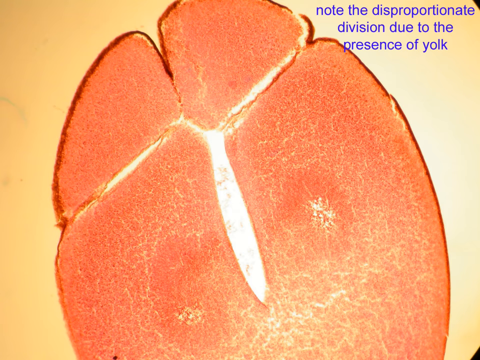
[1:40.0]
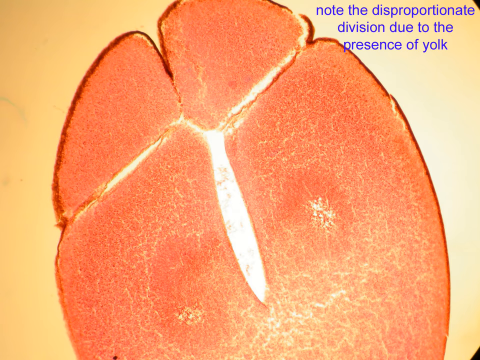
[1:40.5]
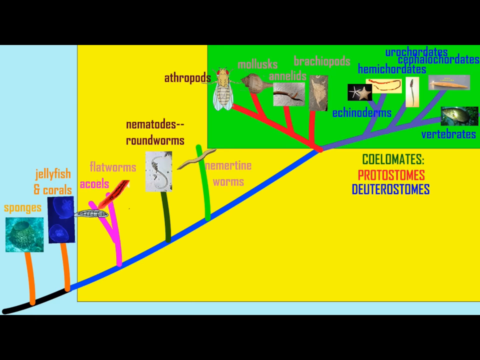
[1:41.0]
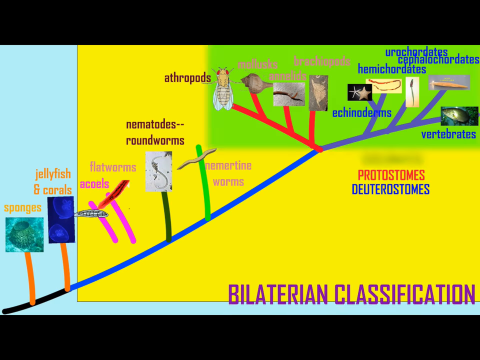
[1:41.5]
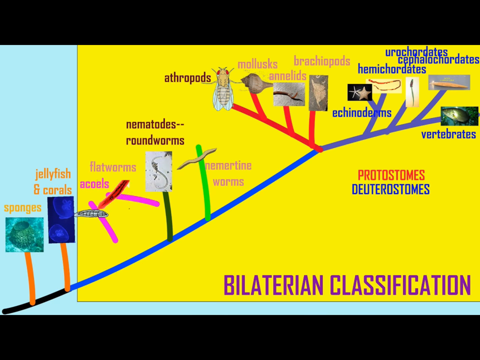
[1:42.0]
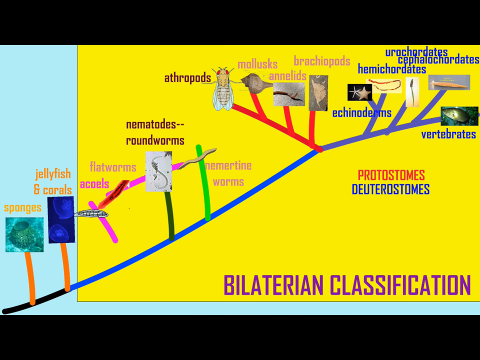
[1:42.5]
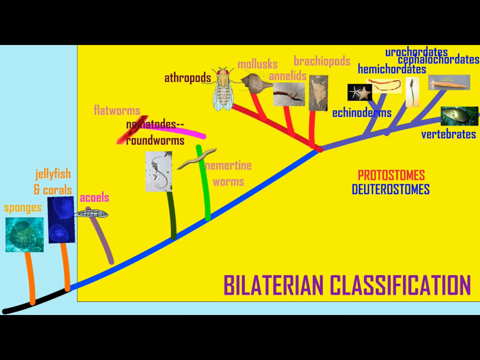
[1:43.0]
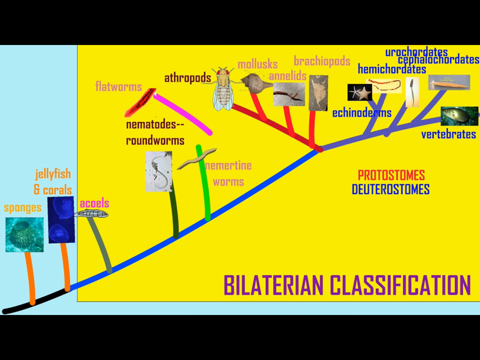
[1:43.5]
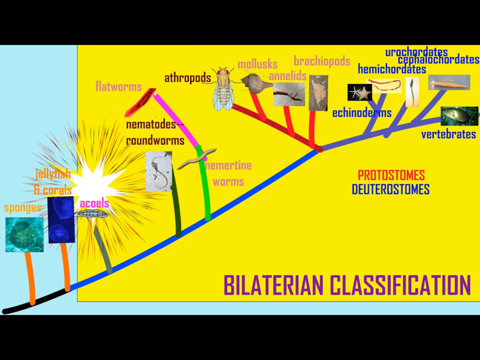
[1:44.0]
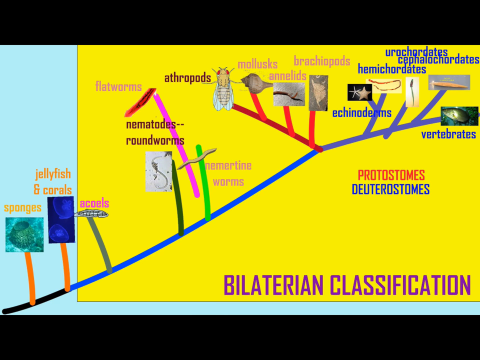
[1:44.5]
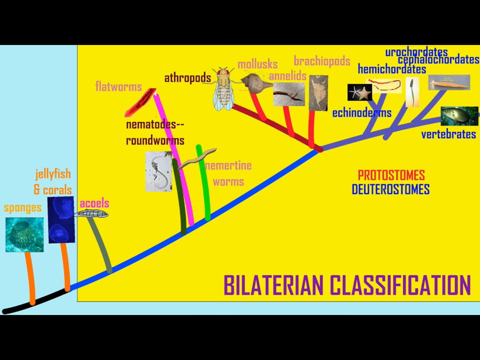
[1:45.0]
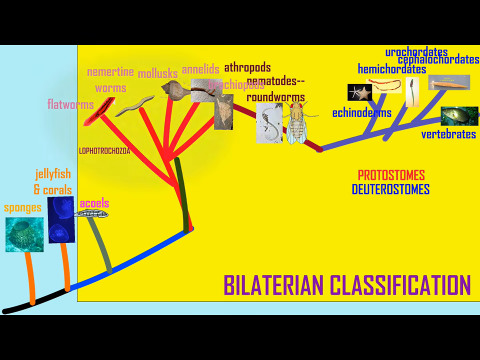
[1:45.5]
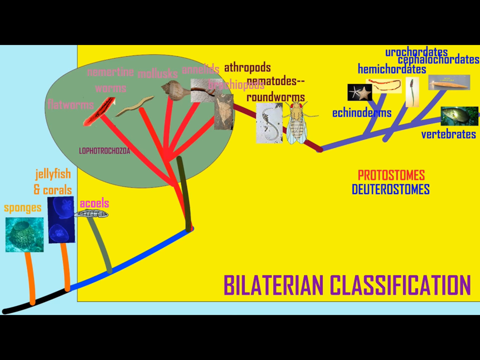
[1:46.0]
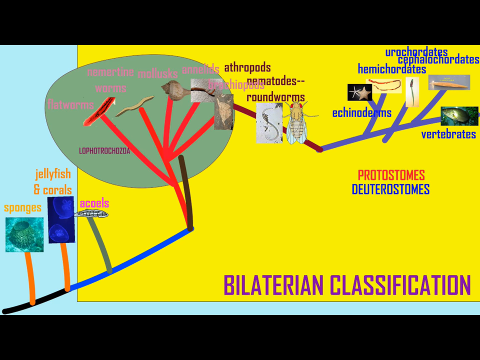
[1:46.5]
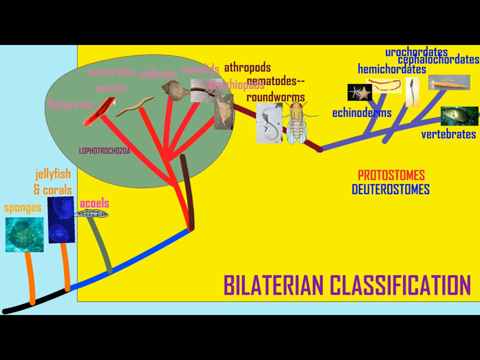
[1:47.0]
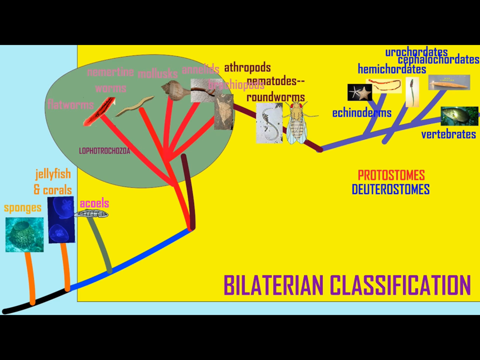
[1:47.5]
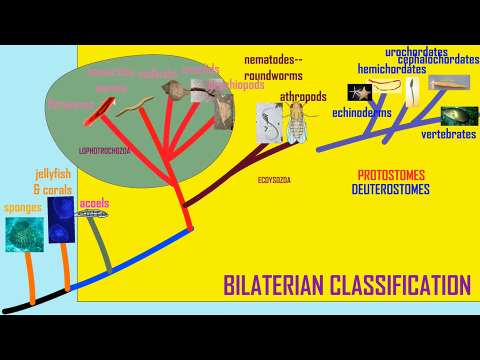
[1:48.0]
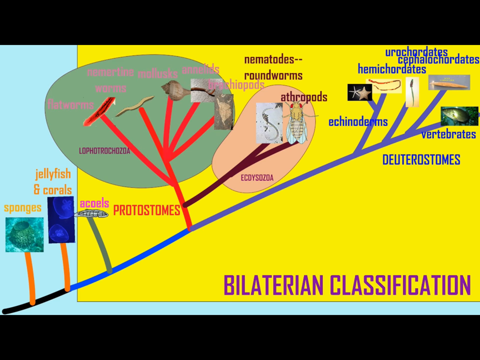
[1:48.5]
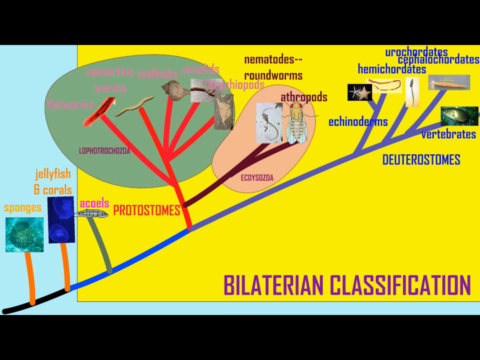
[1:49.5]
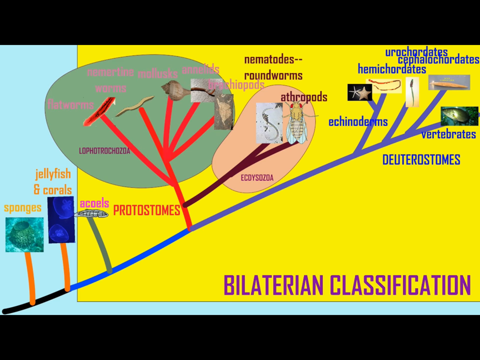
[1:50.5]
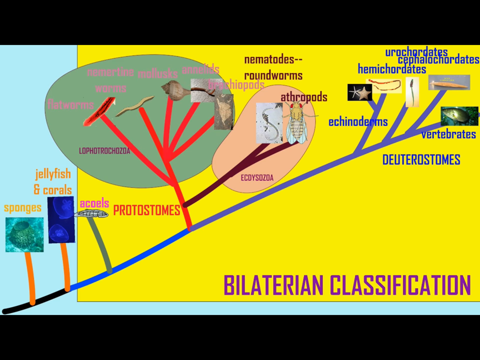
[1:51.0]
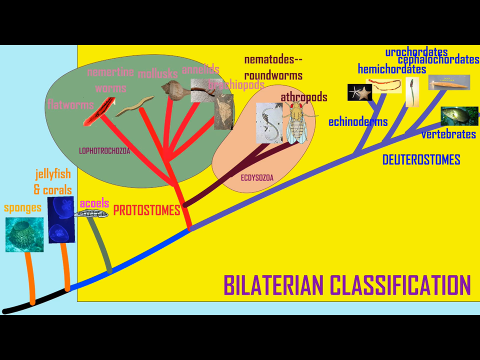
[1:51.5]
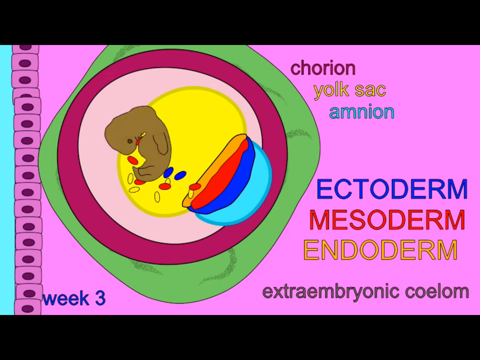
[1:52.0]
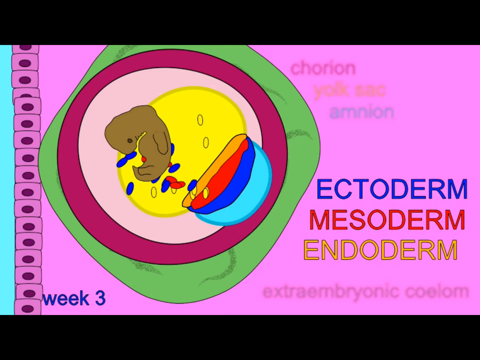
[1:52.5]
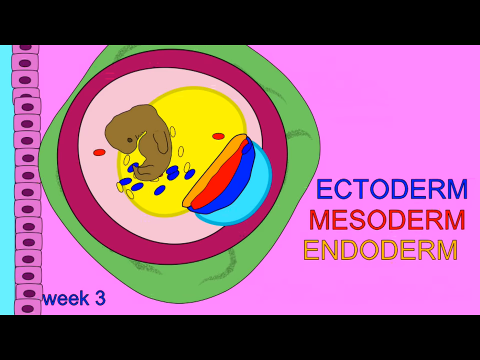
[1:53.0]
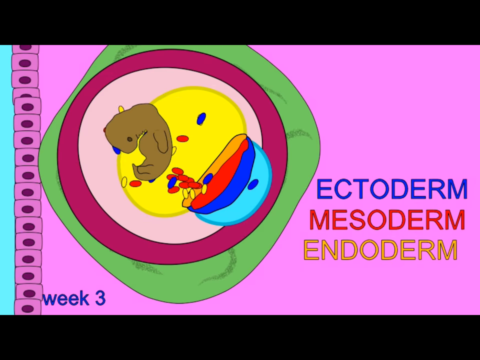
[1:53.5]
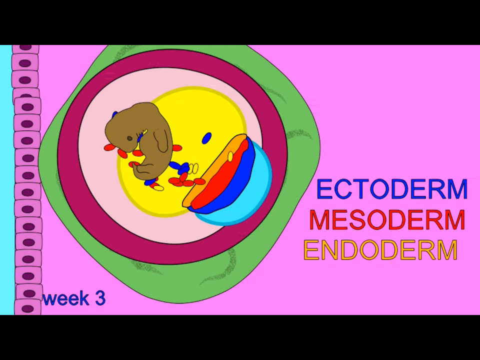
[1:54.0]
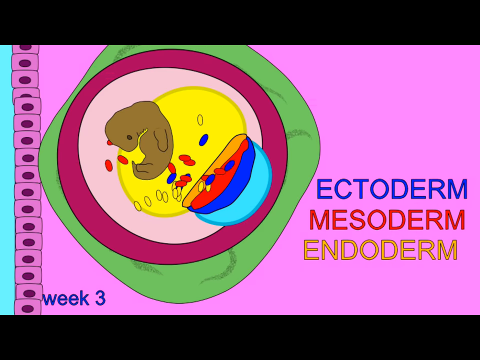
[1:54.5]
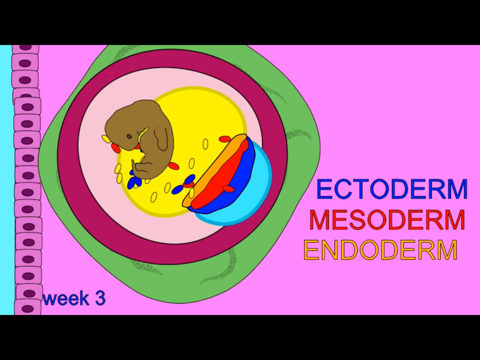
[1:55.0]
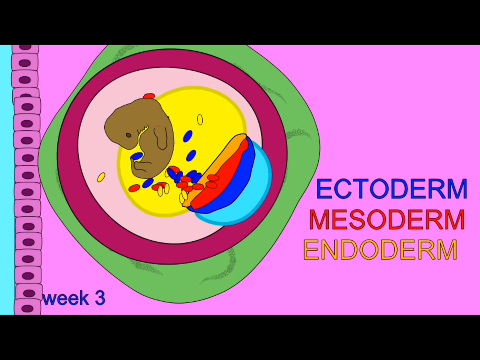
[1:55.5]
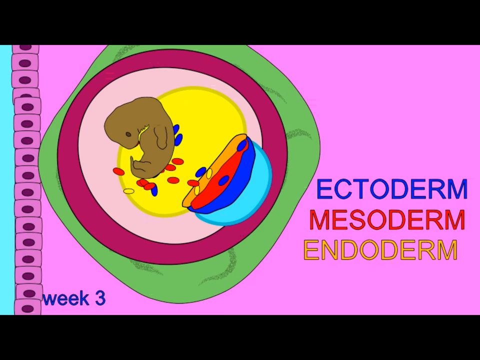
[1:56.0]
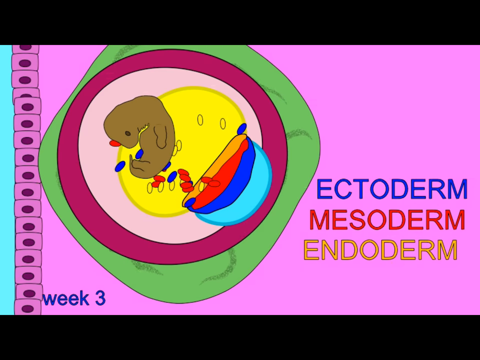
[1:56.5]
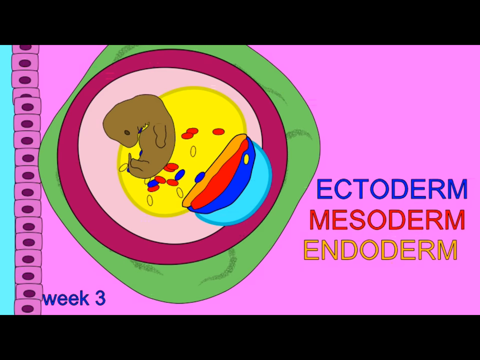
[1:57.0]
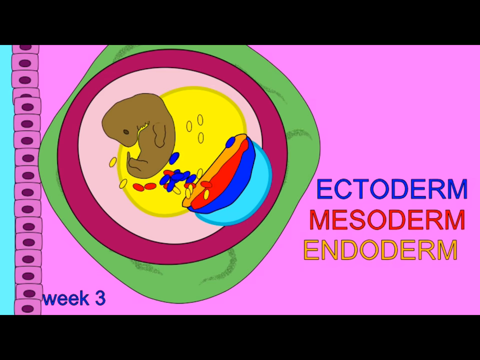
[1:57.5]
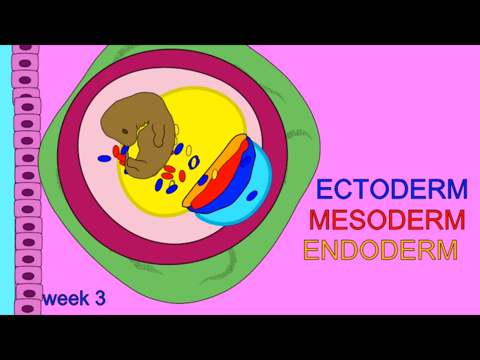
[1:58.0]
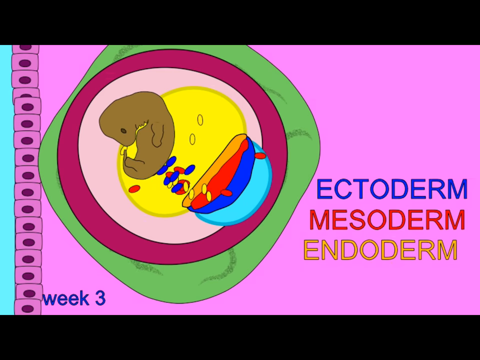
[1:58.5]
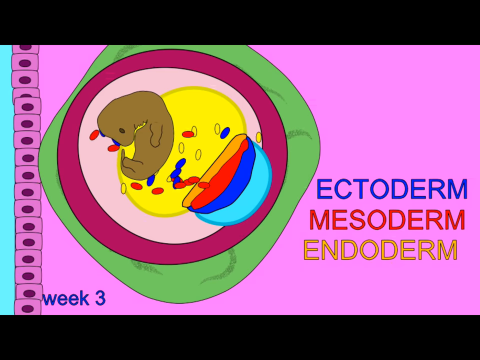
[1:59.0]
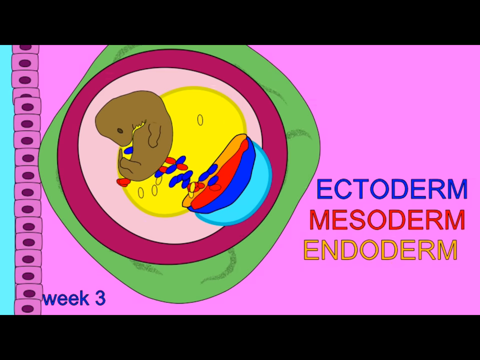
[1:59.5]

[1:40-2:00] An image of a cell or something is shown; it is sort of peach colored, with a white slit going down its center, on a light peach background. At the top right of the screen, purple letters say "note the disproportionate division due to the presence of yolk". It switches to a black screen with a blue square and a yellow square within it. A line runs from the bottom left of the blue square toward the top right of the yellow square, with lines pointing up from this diagonal line. At the bottom right of the square it says "bilaterian classification". Different animals and species are on the lines, the squares sort of move around in lines, and there are different words on it. Then it switches to an illustration of what looks like an embryo inside a body, surrounded by a yellow dot. What look like red and blue blood cells come out of a blue cup-like thing, hitting or flying around the embryo and then flying back.